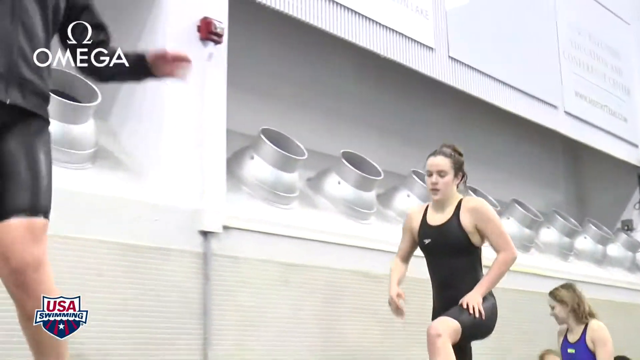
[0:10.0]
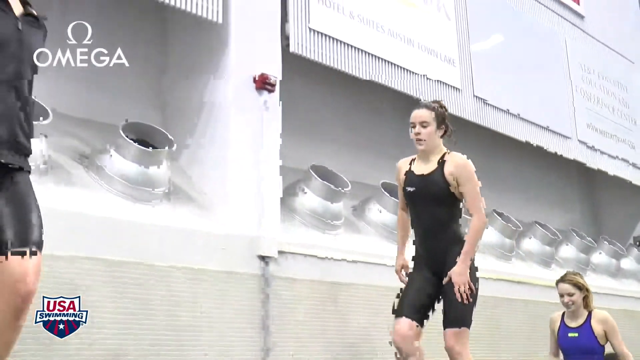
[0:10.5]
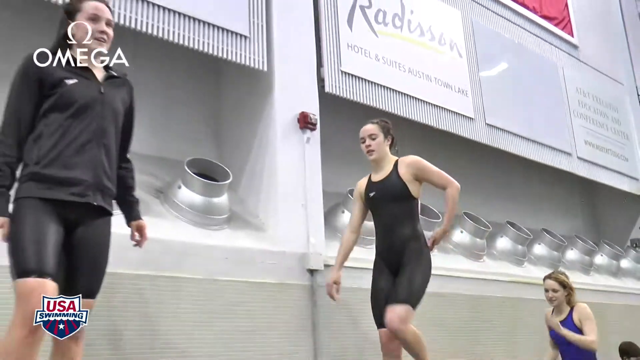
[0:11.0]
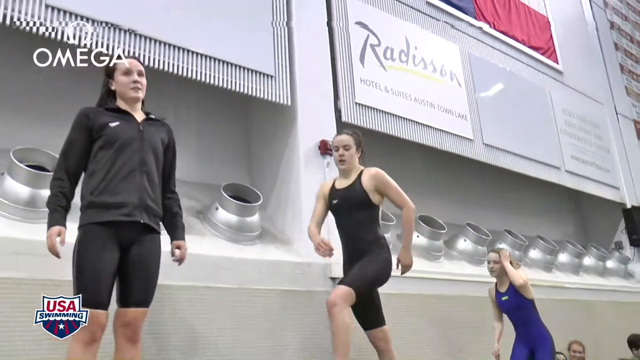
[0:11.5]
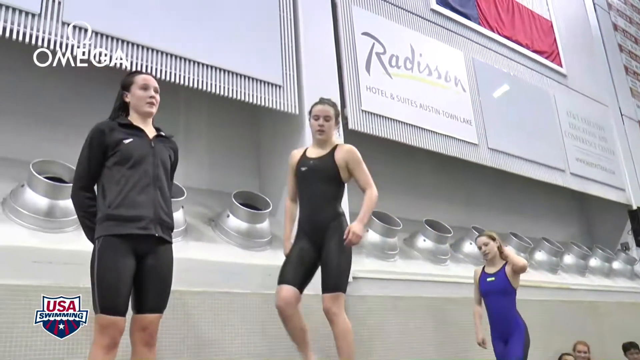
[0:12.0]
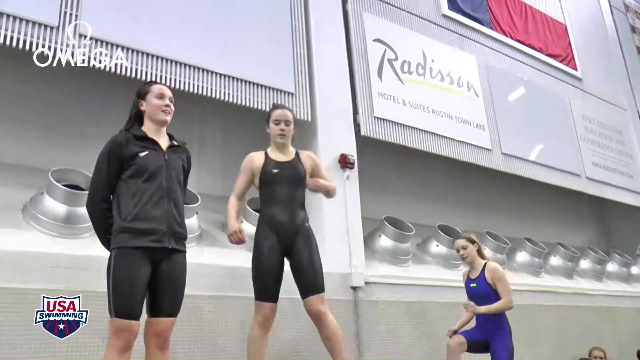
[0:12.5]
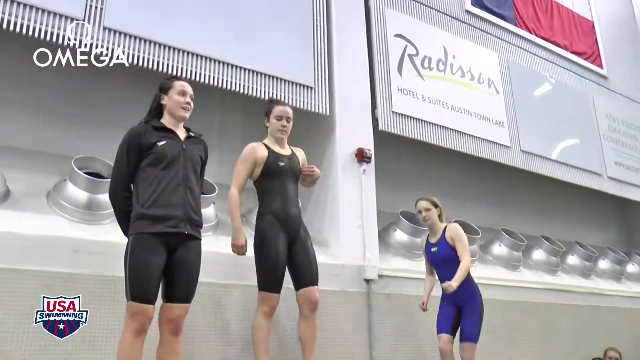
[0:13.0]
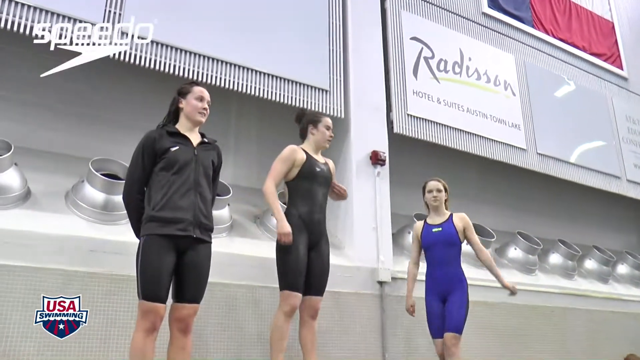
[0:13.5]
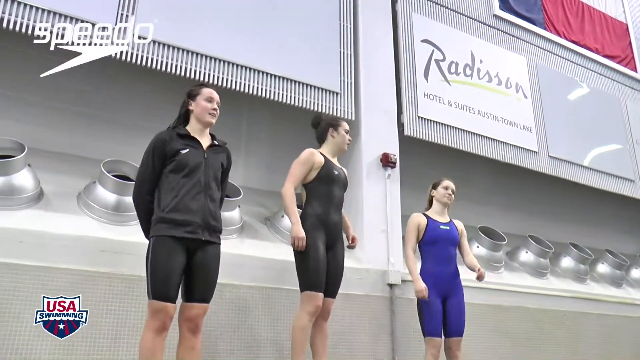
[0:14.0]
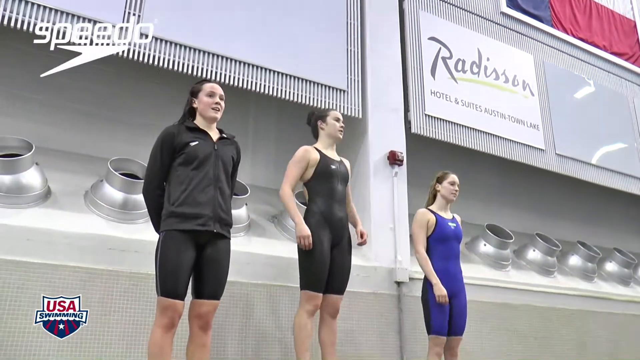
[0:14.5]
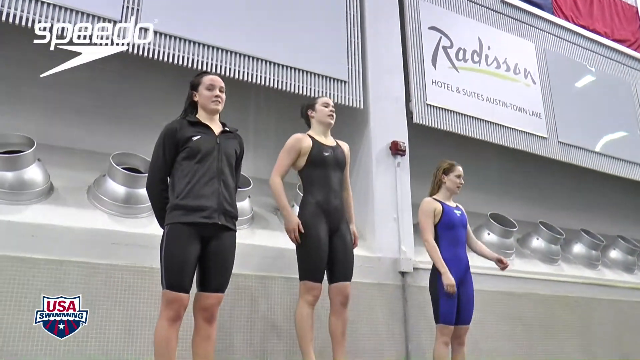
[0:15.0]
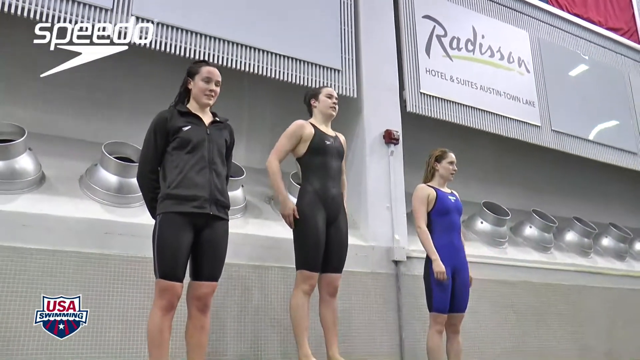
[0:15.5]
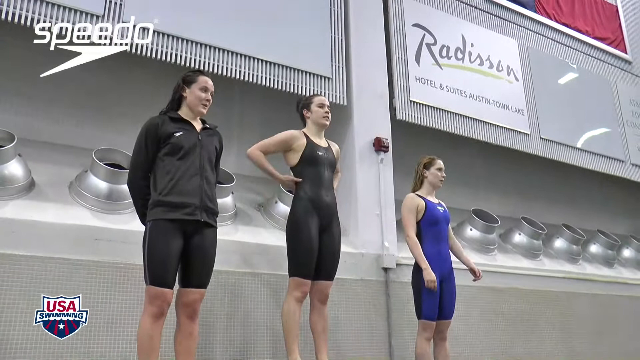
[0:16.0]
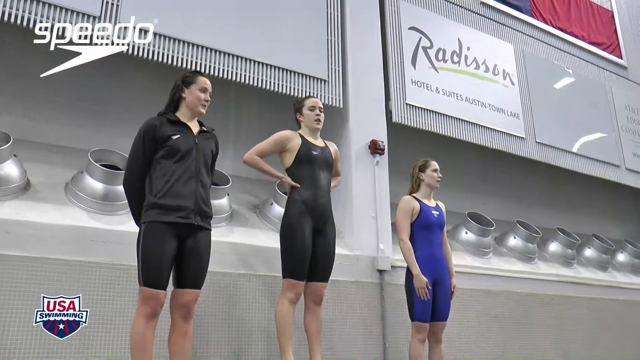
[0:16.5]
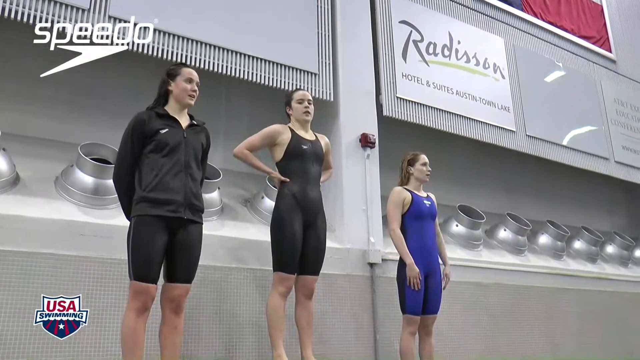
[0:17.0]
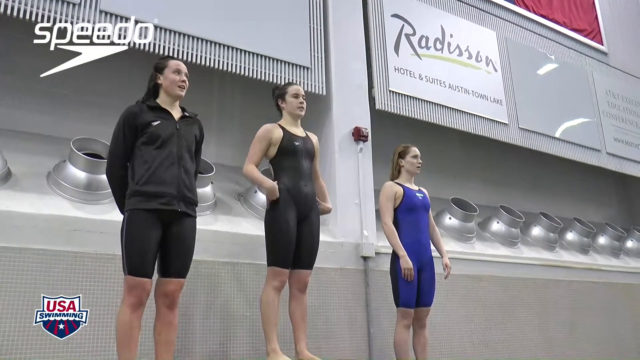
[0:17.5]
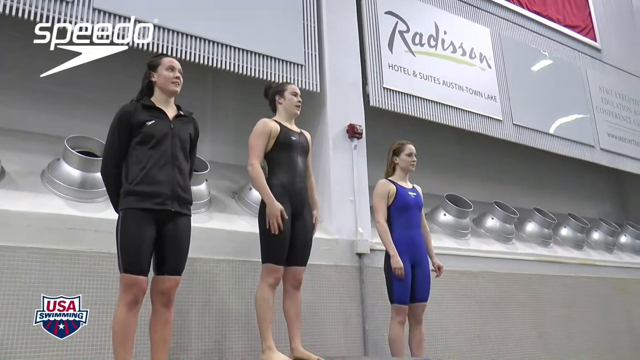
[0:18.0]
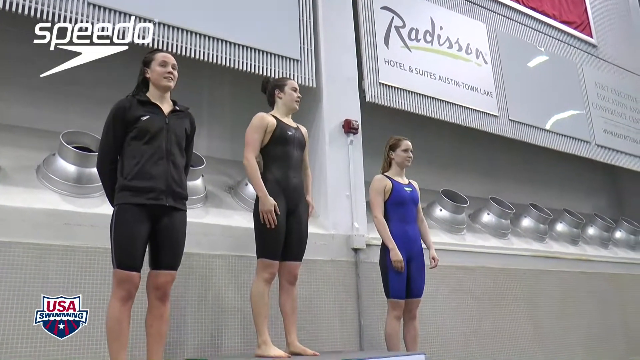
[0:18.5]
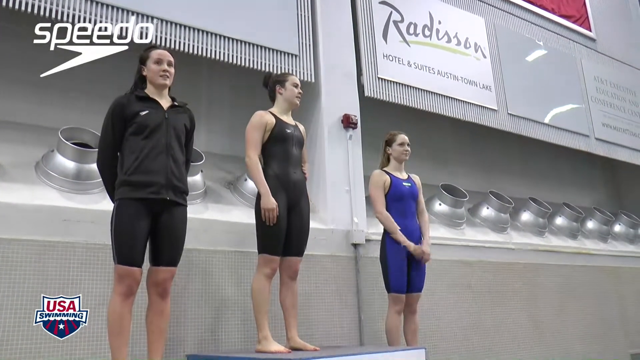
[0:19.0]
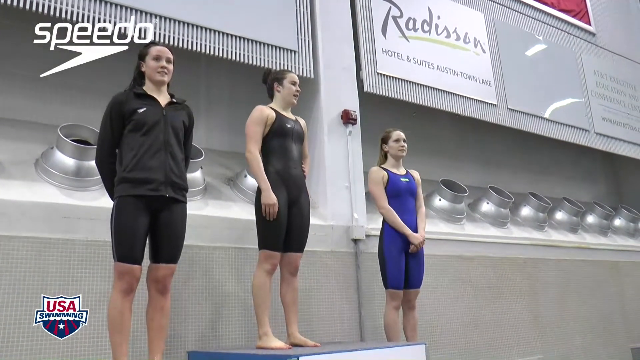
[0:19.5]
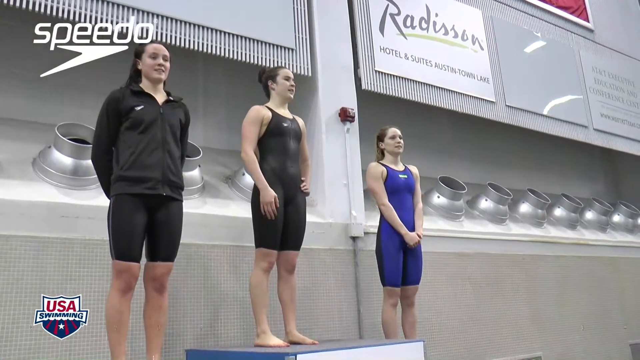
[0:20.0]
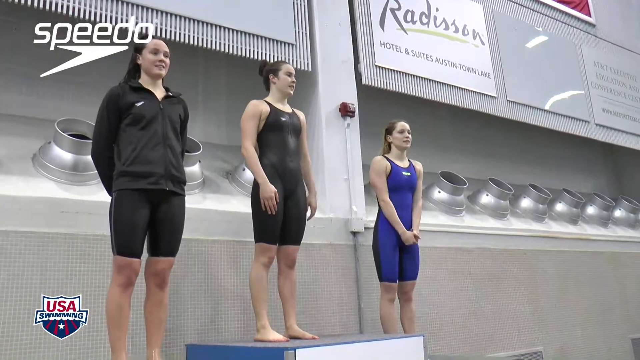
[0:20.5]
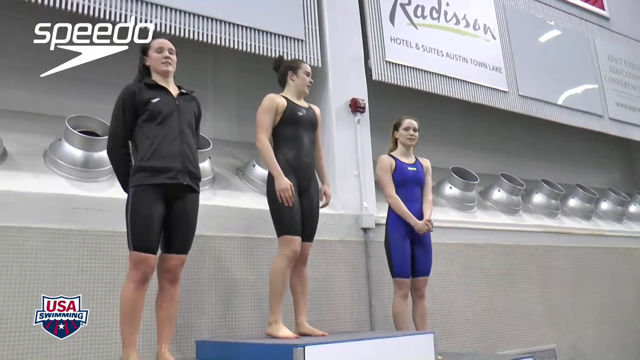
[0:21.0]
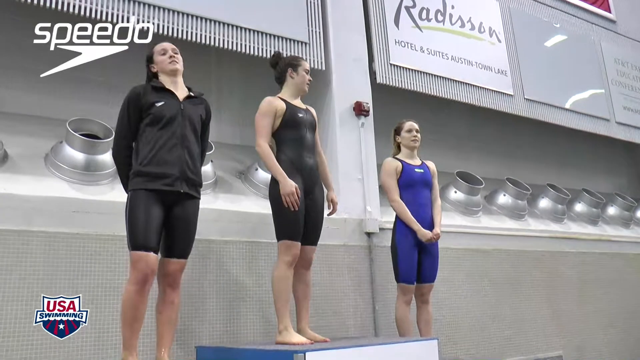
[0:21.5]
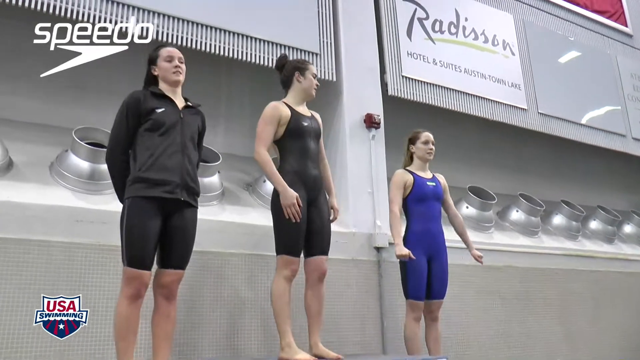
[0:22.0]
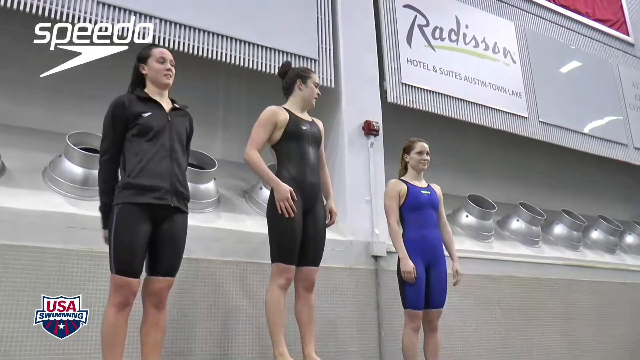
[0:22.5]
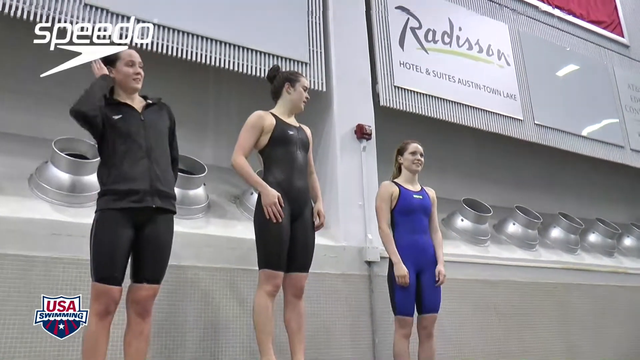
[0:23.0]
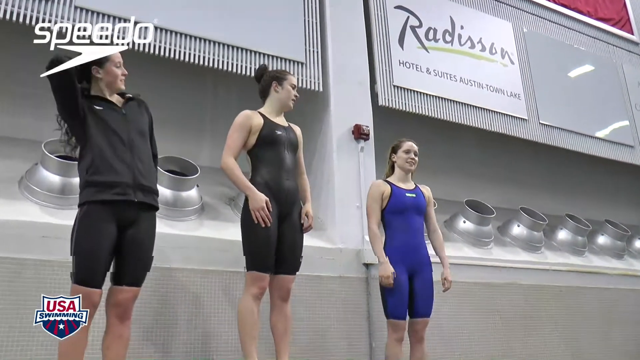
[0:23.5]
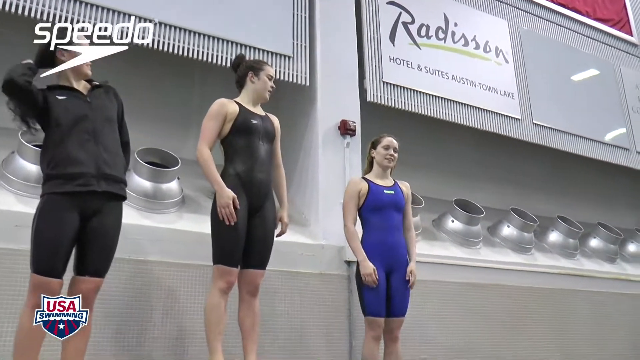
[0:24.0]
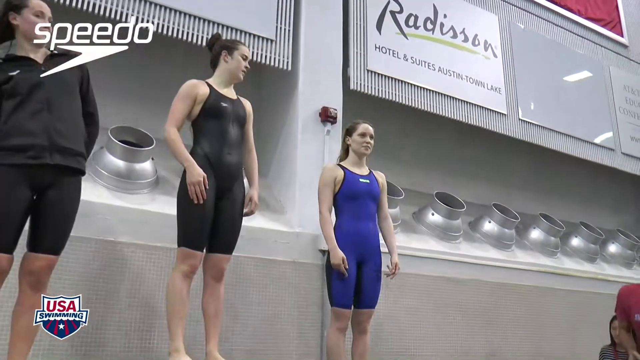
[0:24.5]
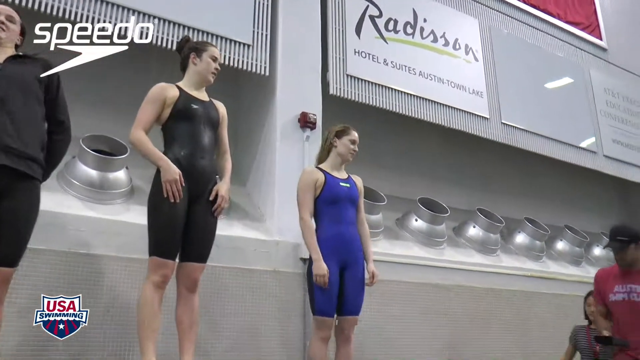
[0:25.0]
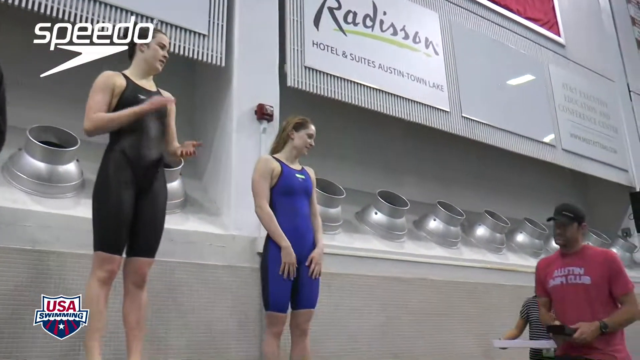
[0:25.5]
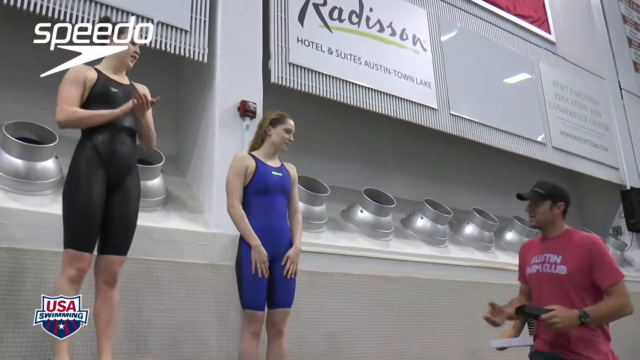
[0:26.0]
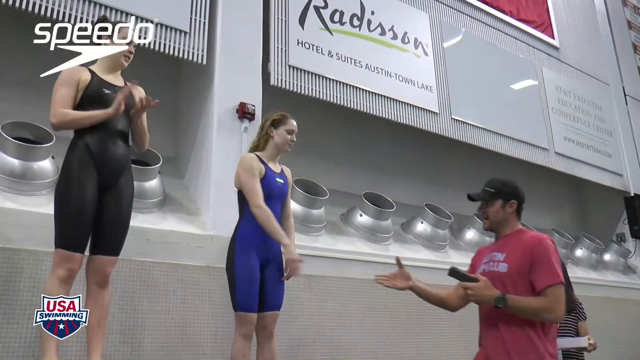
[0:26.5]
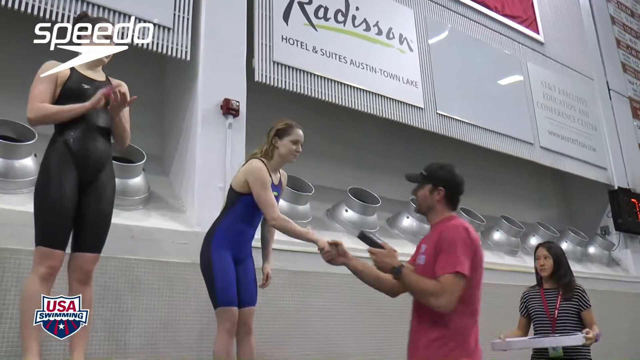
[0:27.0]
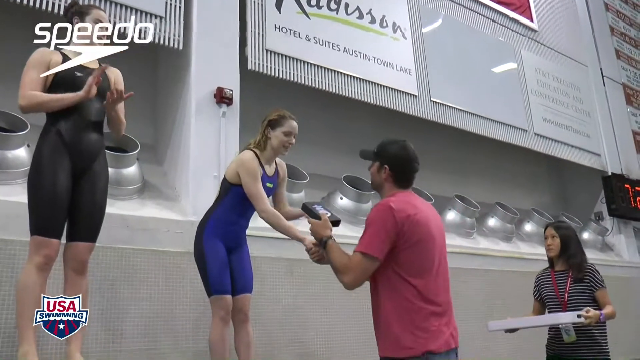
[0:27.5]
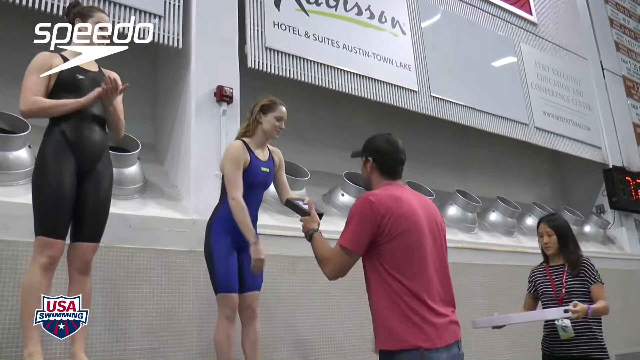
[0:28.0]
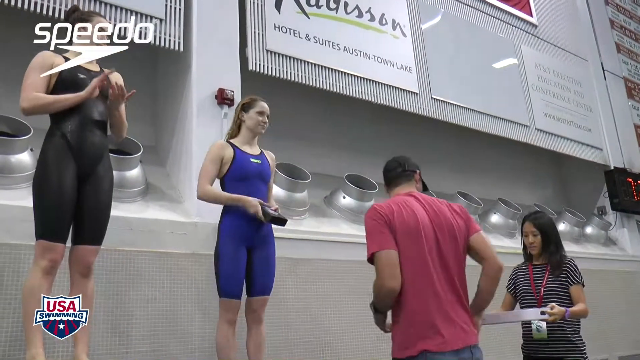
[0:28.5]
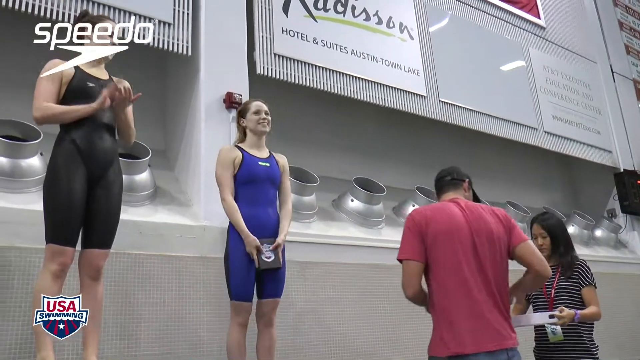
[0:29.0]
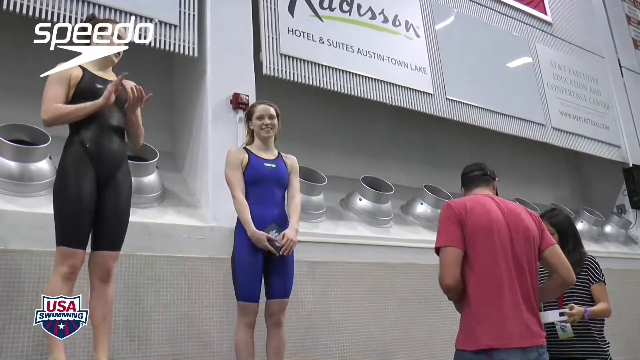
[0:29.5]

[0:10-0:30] The first woman swimmer steps up onto what looks like the second place spot. She wears a black practice jacket, and the bottom of her one-piece swim attire shows black, knee-length shorts underneath. The middle swimmer, on the first place podium, stands with her hands on her hips and wears a full one-piece black swimsuit with shorts extending to her knees, much like bicycle shorts. The swimmer on the third place podium wears a bright blue swimsuit in the same style and stands with her arms by her sides. On the wall between the first and third place swimmers is a fire alarm. In the top right of the screen is a sponsor panel for Radisson hotels, with "hotel and suites Austin town lake" written underneath. The red, white and blue USA swimming logo remains in the bottom left, and a larger Speedo logo is in the top right. The swimmers are breathing very hard, seemingly still tired from their swim. They are then presented with medals by a young man, maybe in his 30s, wearing a red t-shirt and a black baseball cap. He hands them small black boxes, presumably containing their medals. He is accompanied by an Asian woman holding the medals in a white tray.